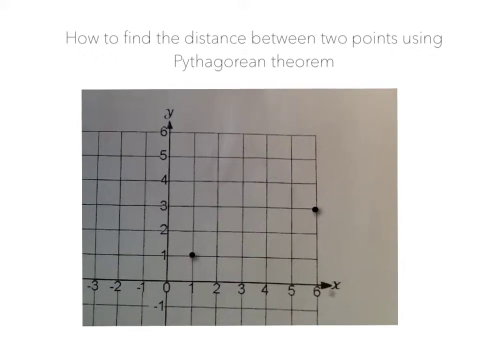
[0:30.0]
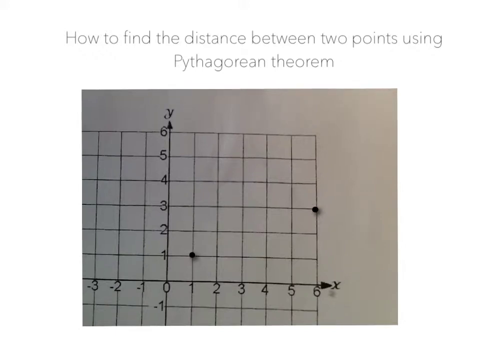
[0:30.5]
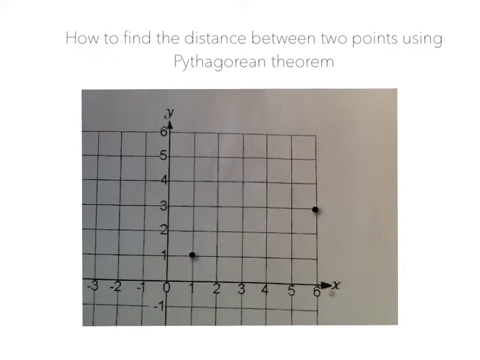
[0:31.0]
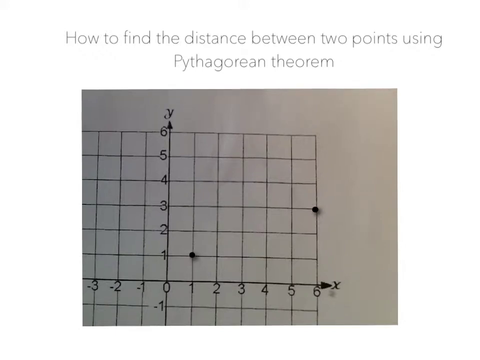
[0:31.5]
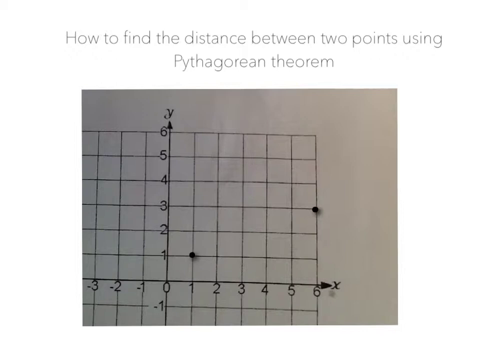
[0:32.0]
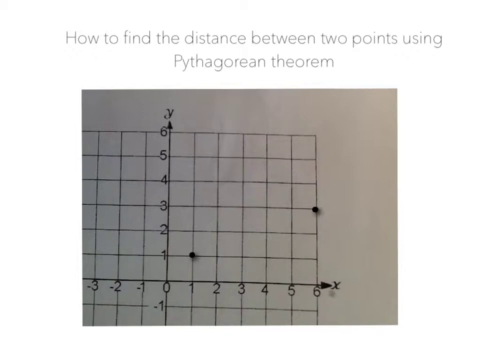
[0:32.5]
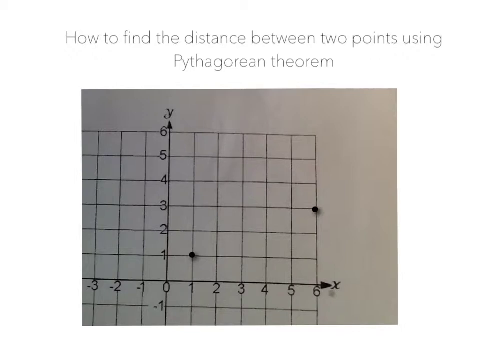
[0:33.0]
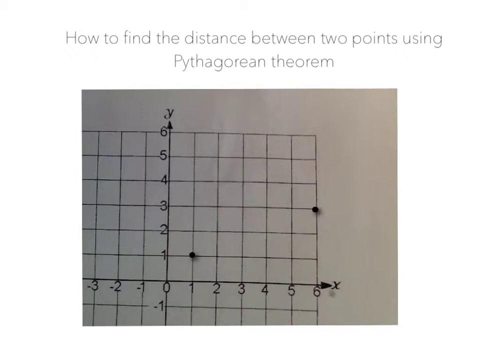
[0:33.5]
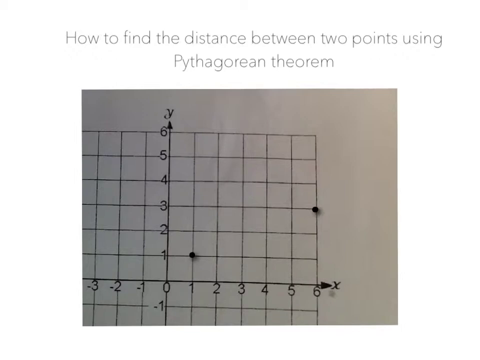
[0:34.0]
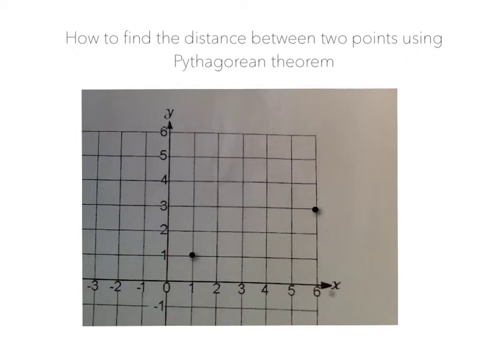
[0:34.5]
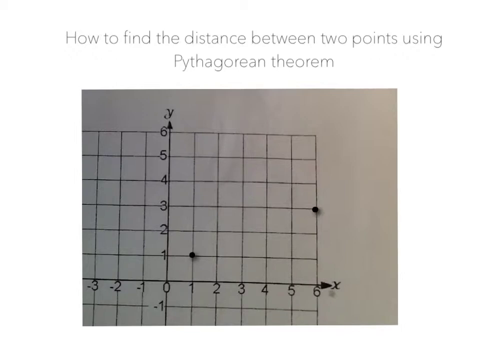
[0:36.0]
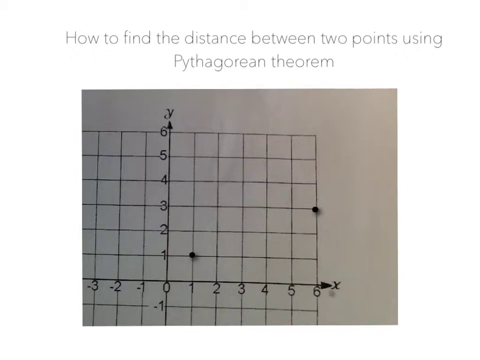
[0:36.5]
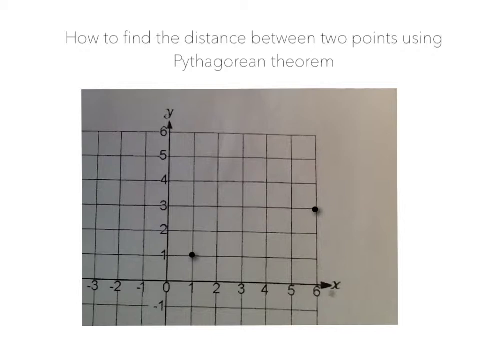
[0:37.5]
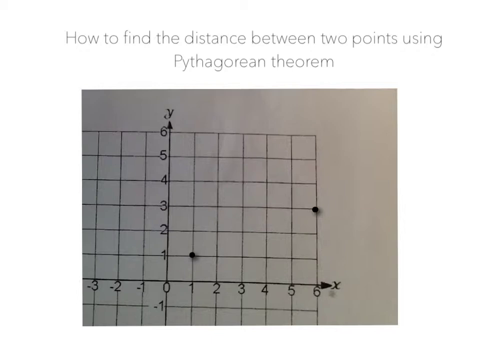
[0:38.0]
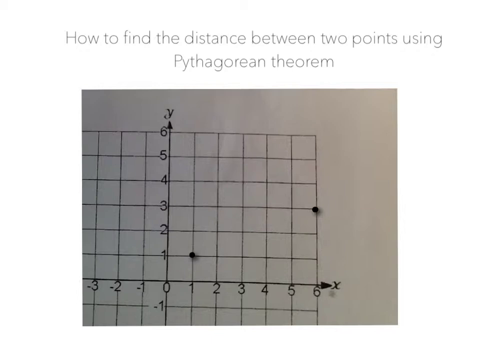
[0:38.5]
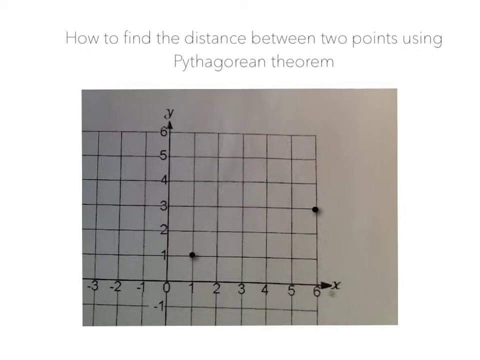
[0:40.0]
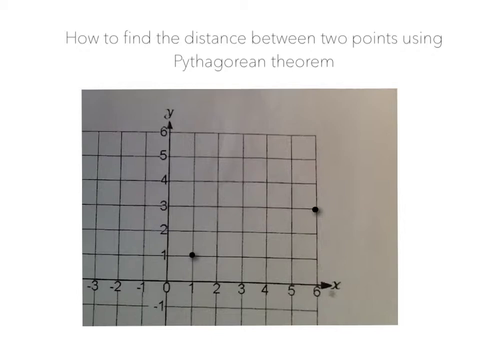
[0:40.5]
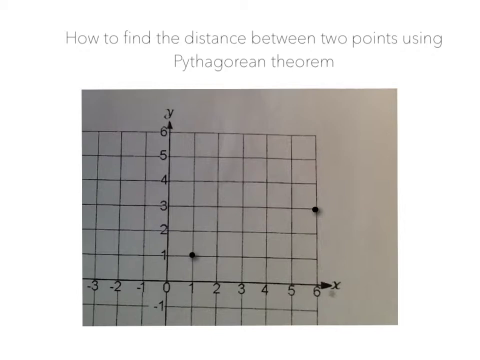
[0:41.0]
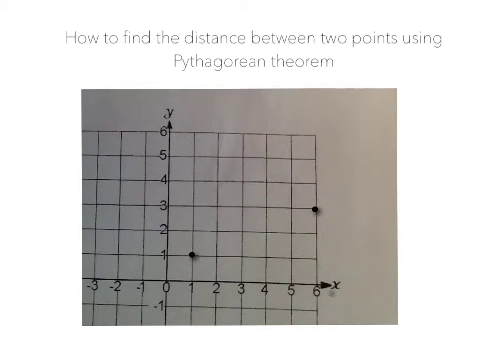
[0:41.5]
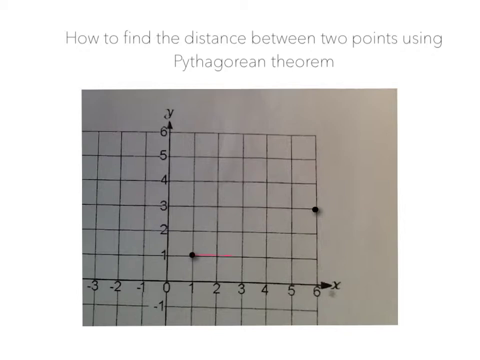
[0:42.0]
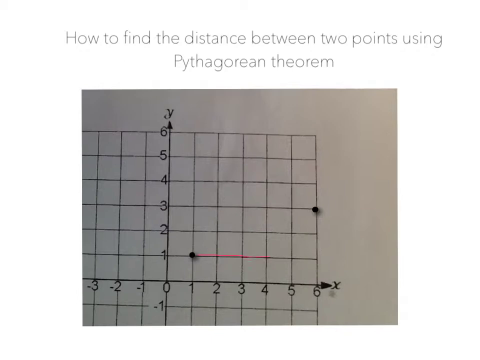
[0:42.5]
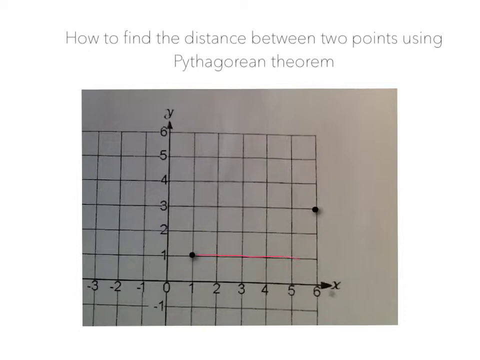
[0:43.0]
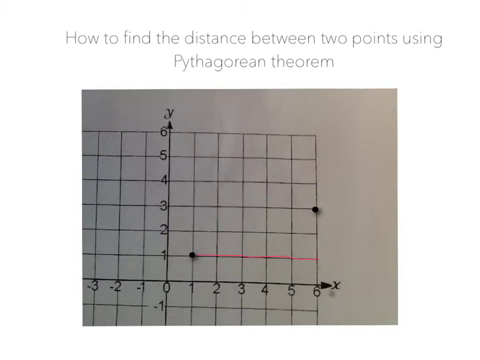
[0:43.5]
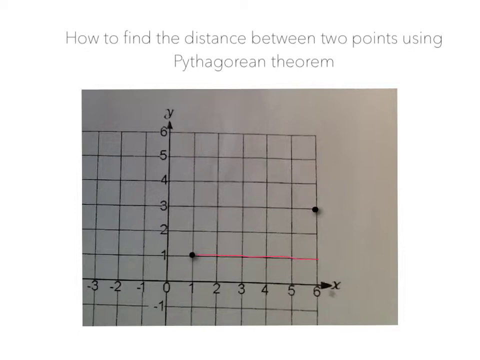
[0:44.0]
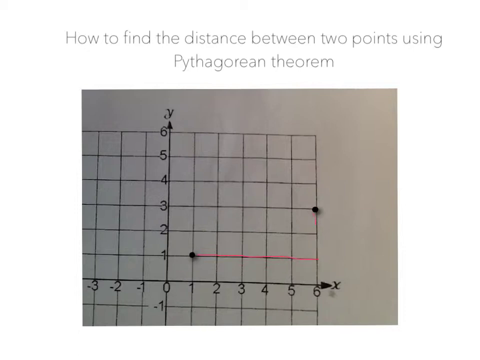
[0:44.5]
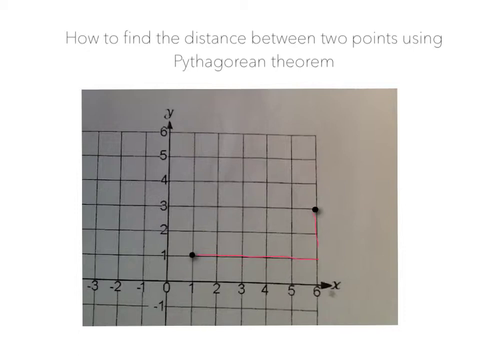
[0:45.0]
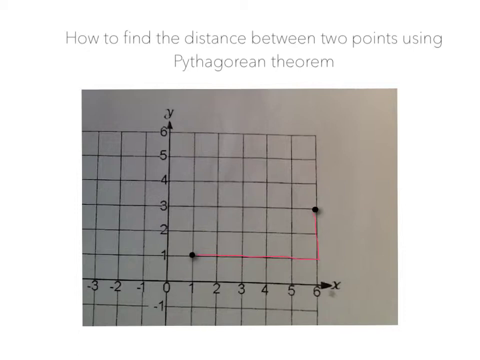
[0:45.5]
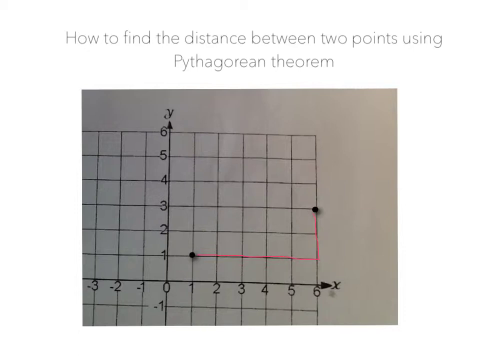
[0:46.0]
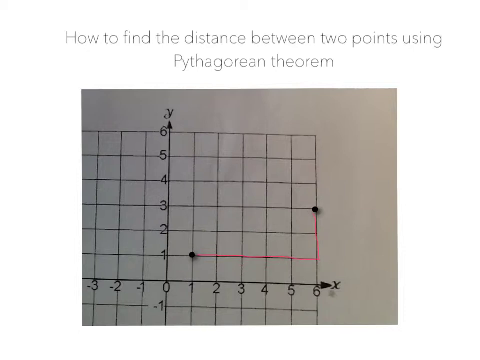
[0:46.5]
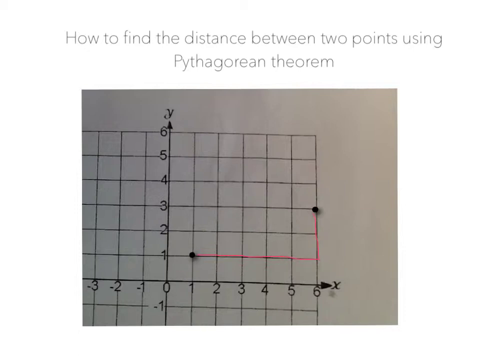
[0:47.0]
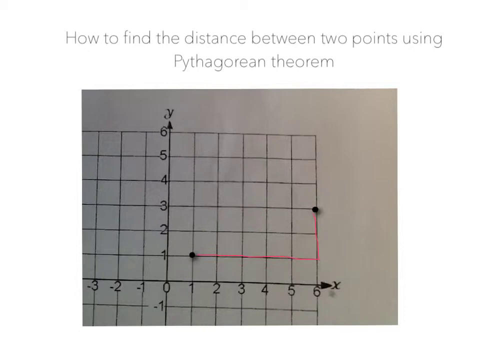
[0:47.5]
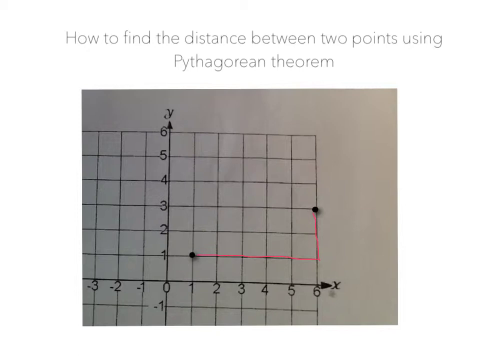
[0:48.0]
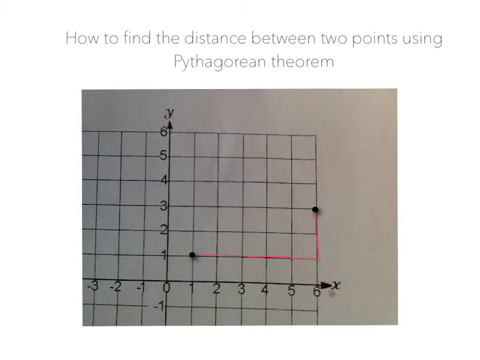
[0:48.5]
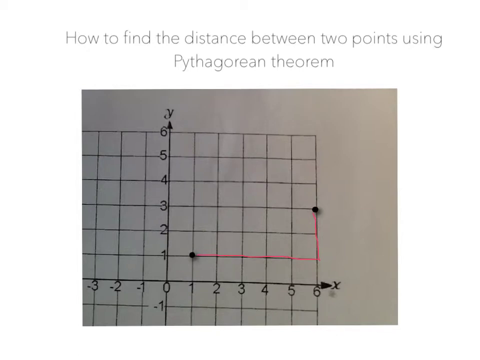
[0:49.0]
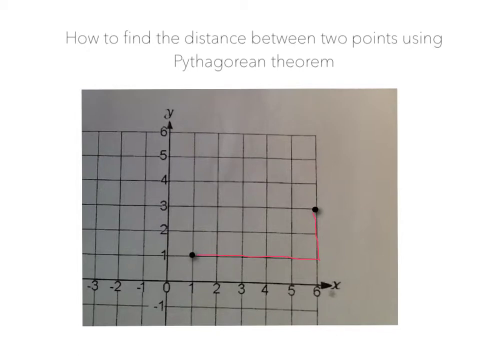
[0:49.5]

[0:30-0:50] The still, partial shot of the graph on the grid remains on screen: ten columns with the first partially obscured because it is cut off by the screen, eight rows, the Y axis along the line between the fourth and fifth columns, and the X axis along the line between the sixth and seventh rows. Numbers run along the lines of each row and column, with the y-axis going from 6 at the top to 0 at the intersection and then -1 and -2, and the x-axis going from -3 on the left to 0 and then 1 to 6. Above the graph, two lines of faded gray text read "How to find the distance between two points using" and "Pythagorean theorem". Two dots are on the graph: one at the intersection of 1 on the y-axis and 1 on the x-axis, the other at the intersection of 3 on the y-axis and 6 on the x-axis. After a few seconds a red line appears, running from the first dot to the intersection of 1 y and 6 x, then extending upwards until it stops at the dot at 3 y and 6 x. The lines remain on the screen until the end.